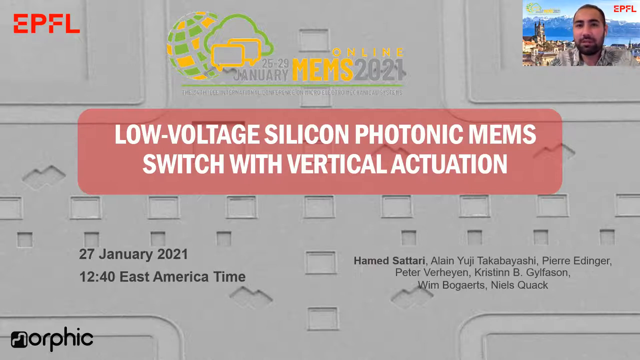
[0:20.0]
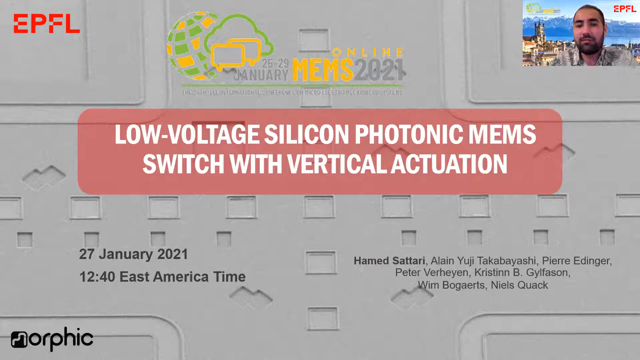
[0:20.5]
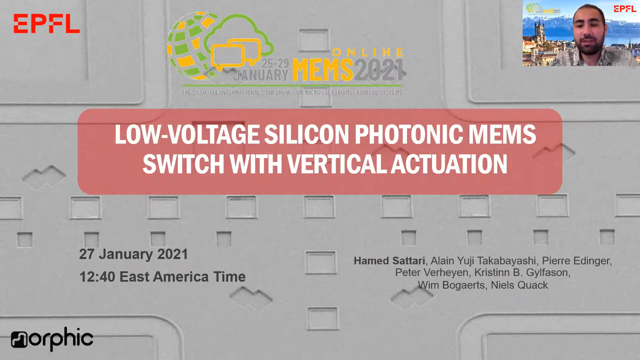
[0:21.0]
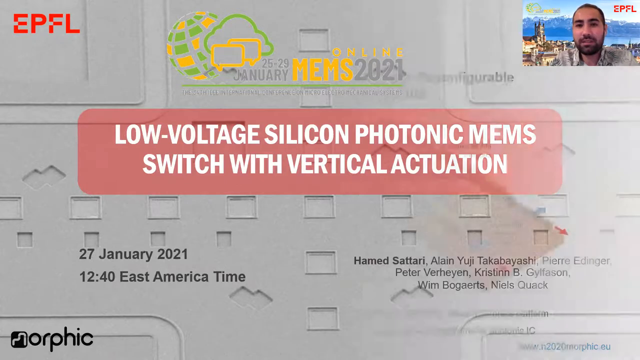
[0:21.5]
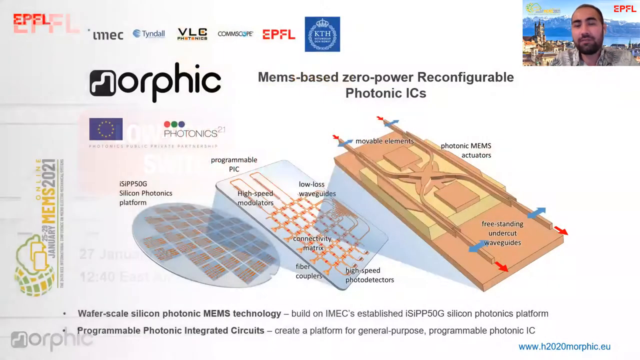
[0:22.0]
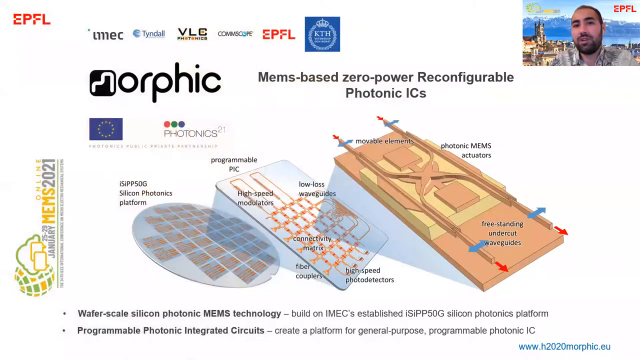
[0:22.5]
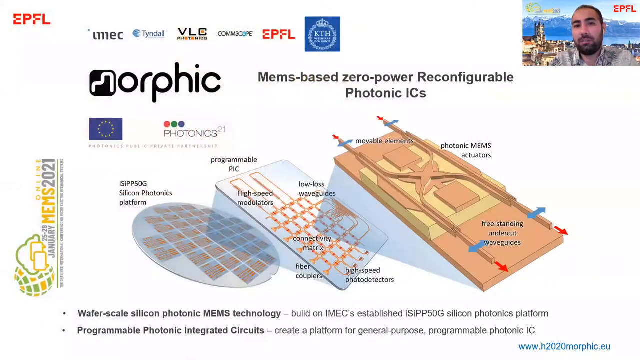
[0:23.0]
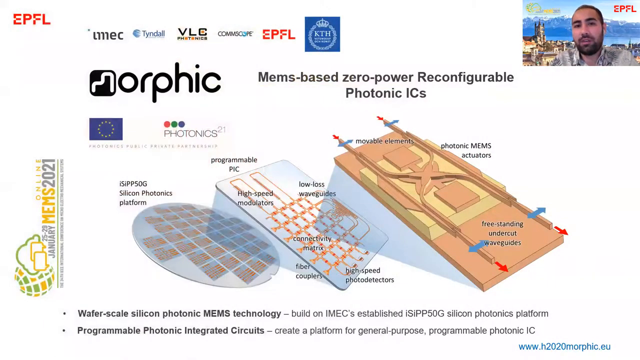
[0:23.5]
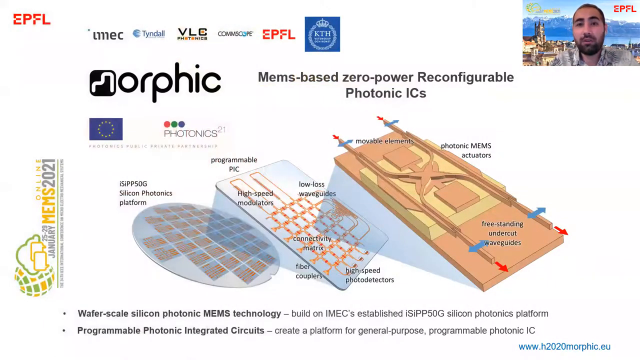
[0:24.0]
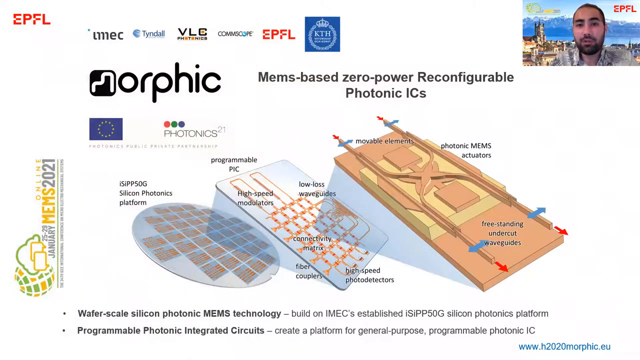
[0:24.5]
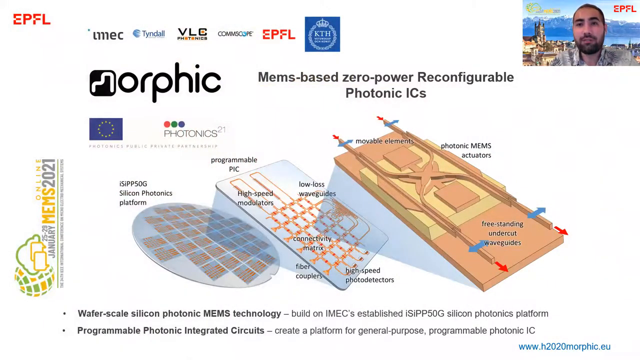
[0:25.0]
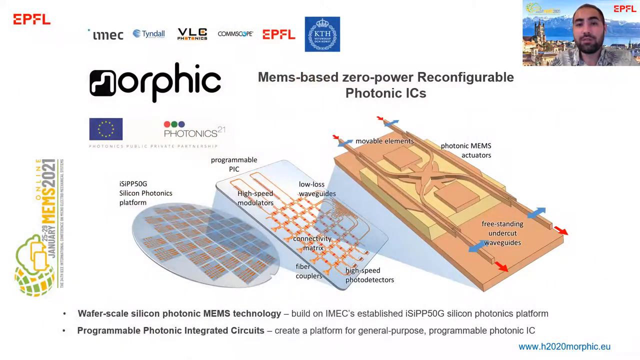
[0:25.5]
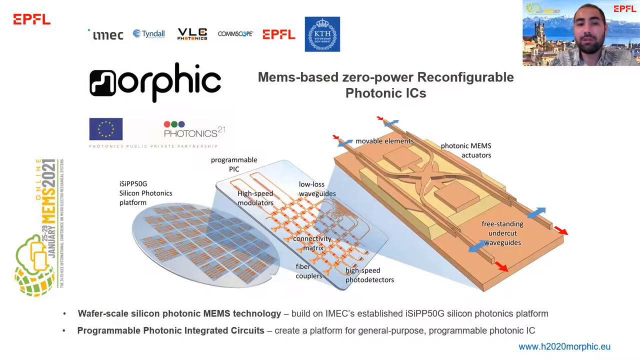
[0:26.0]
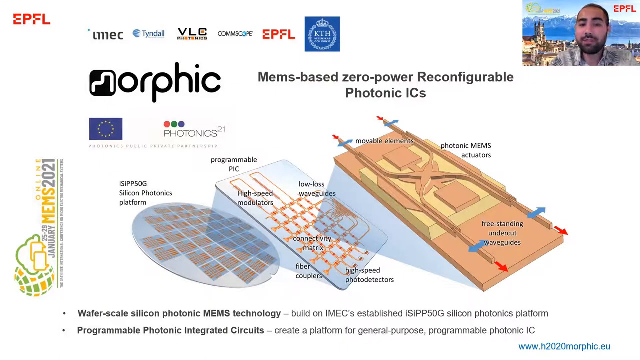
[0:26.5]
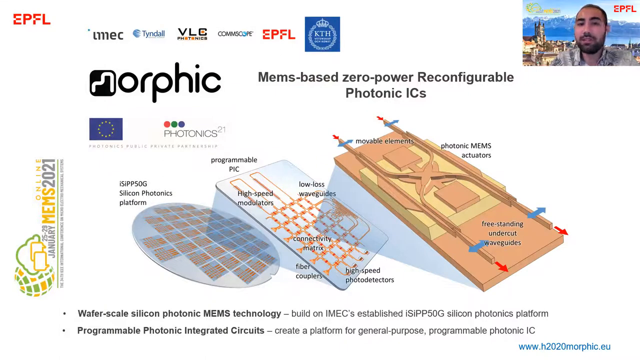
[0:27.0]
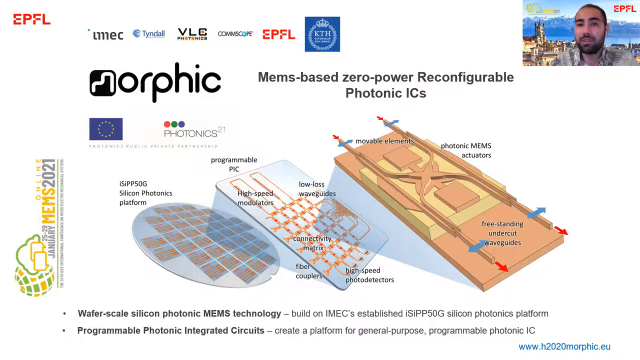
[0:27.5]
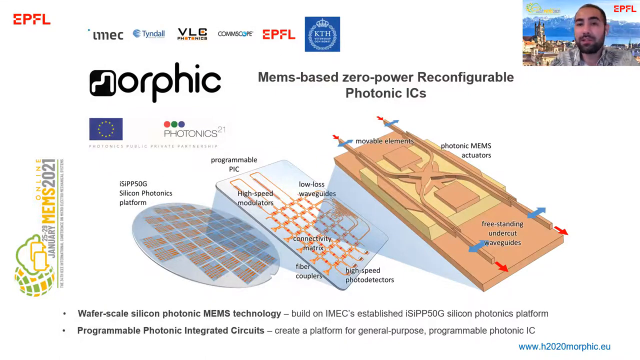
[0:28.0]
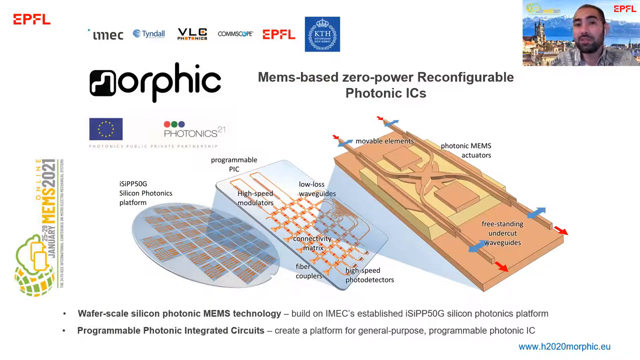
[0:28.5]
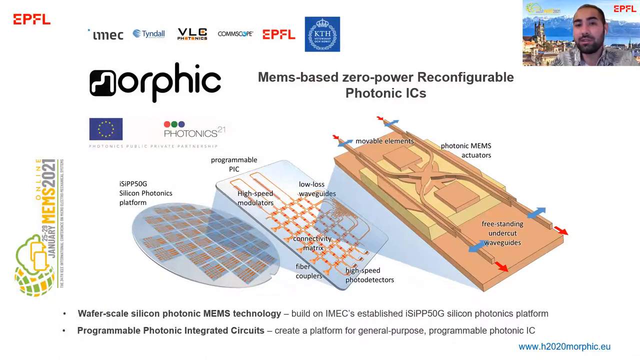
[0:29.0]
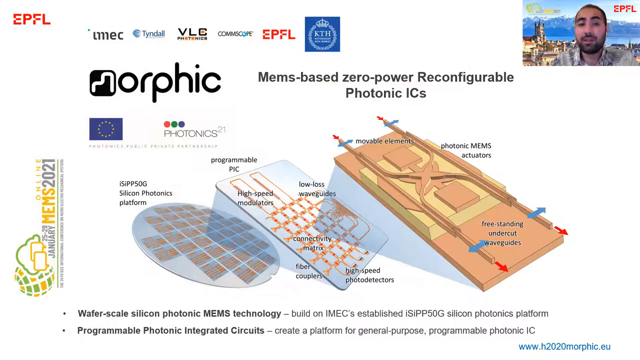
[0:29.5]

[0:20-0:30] The man continues talking about the low-voltage silicon photonic MEMS switch with vertical actuation, then the slide changes to one with a lot of new information. At least six brand logos are shown as supporting the video, one of them EPFL. The slide presents "MEMS-based zero-power reconfigurable photonic ICS", some sort of electric component with many parts labelled in the image. It shows how they are composed: individual MEMS units, many of which unite to form a bigger structure.